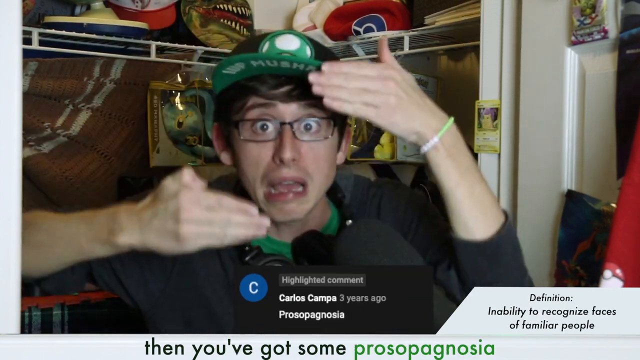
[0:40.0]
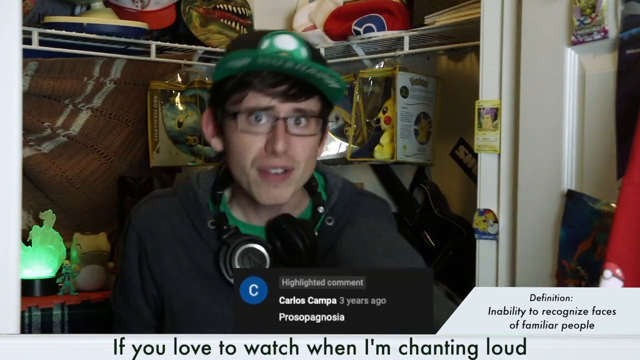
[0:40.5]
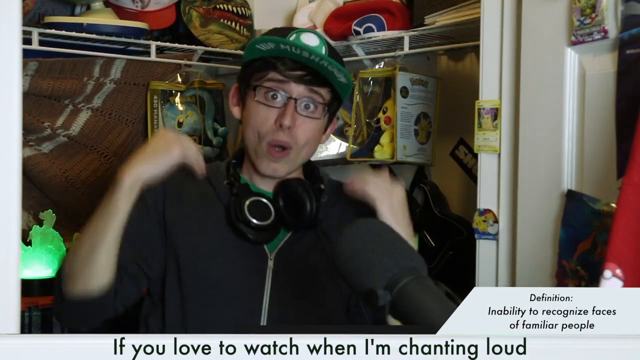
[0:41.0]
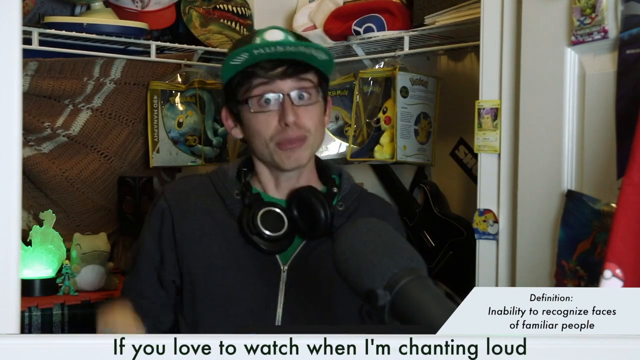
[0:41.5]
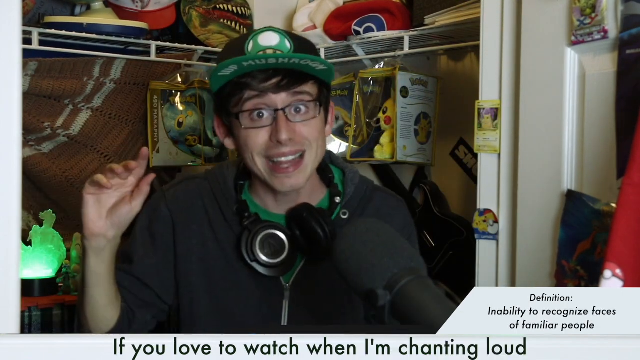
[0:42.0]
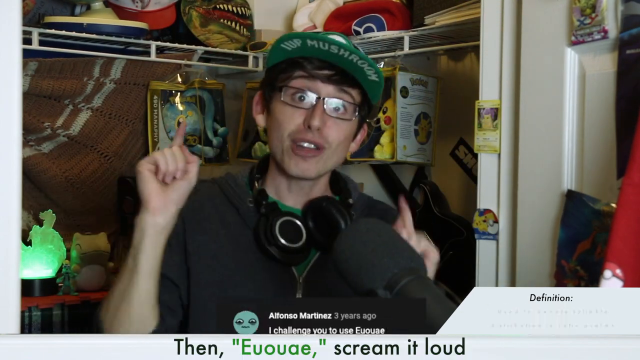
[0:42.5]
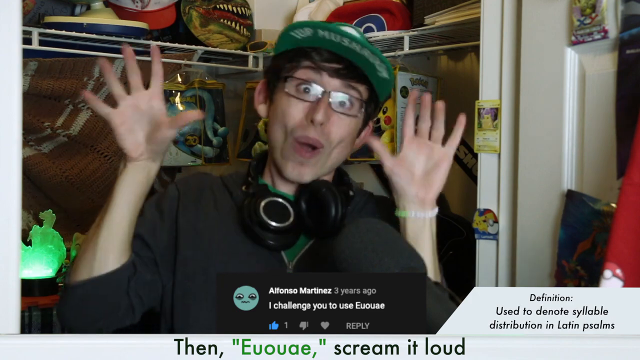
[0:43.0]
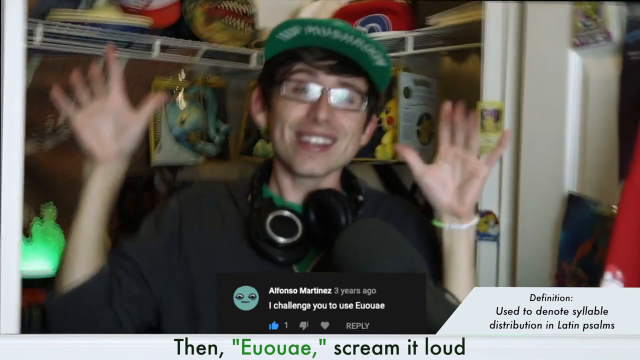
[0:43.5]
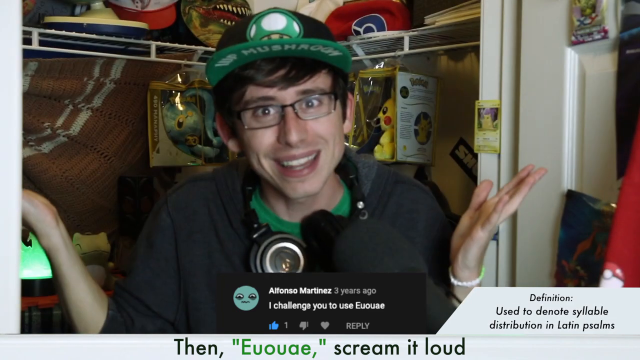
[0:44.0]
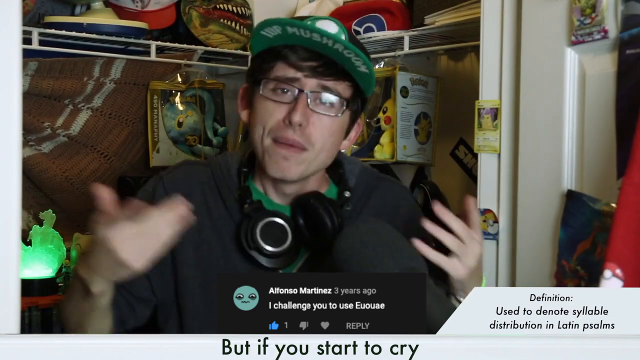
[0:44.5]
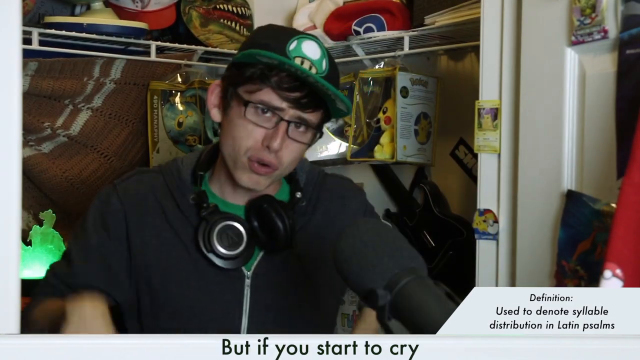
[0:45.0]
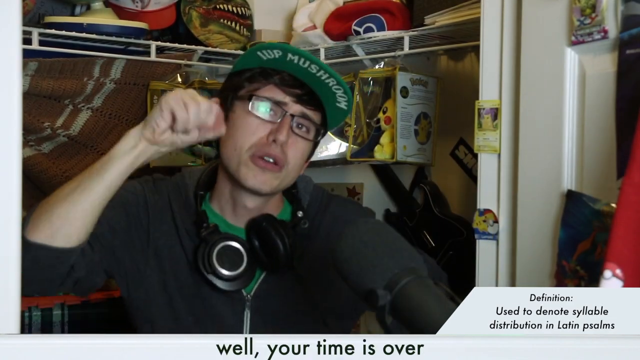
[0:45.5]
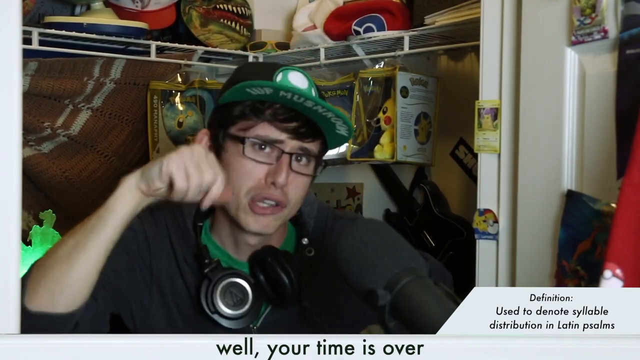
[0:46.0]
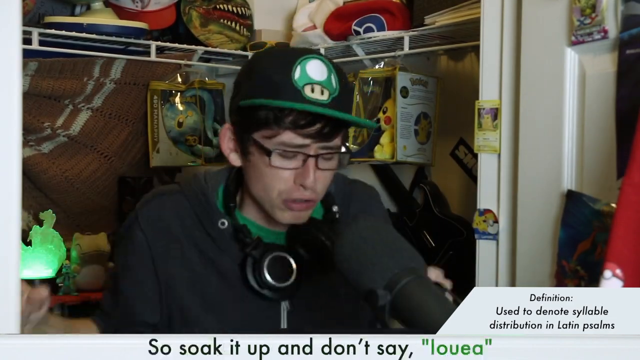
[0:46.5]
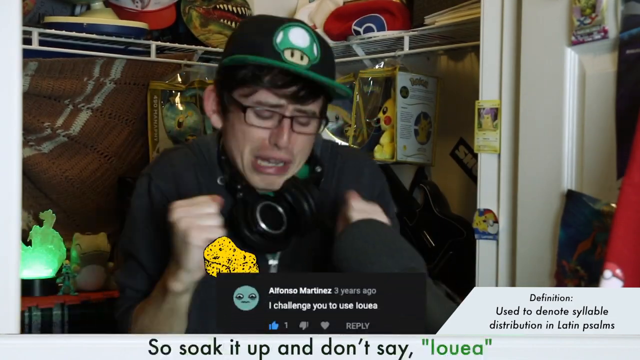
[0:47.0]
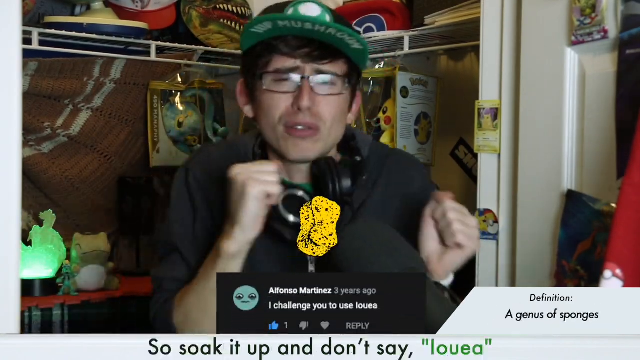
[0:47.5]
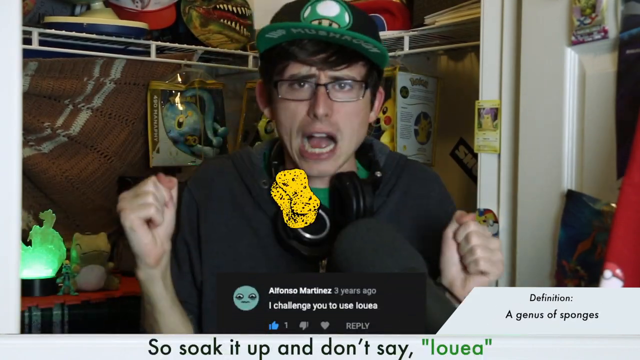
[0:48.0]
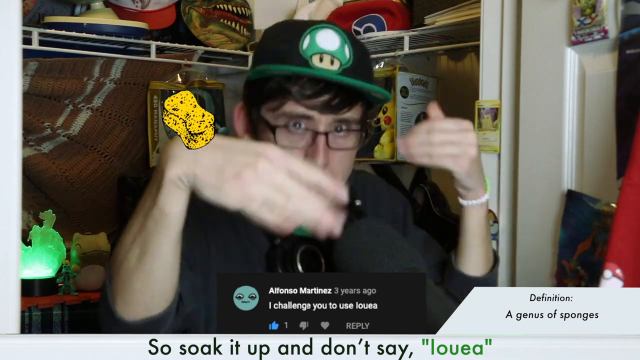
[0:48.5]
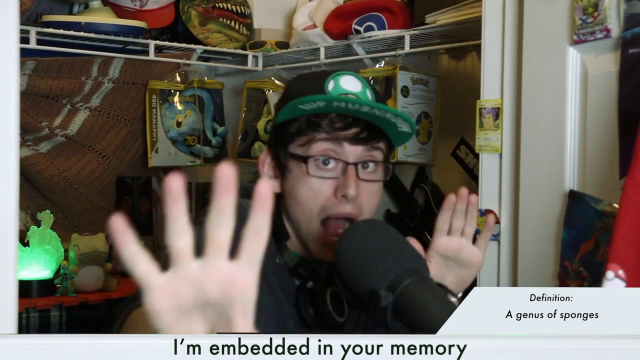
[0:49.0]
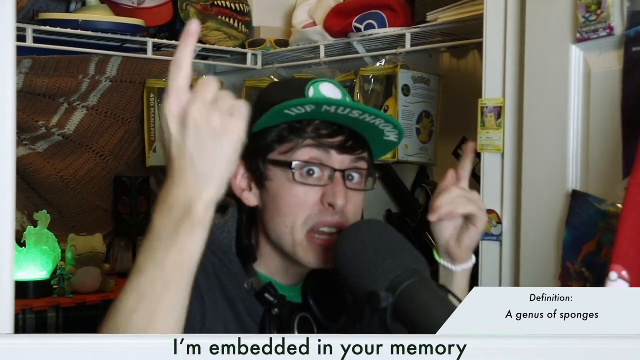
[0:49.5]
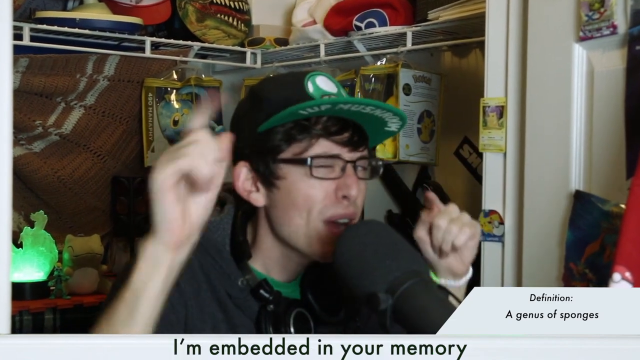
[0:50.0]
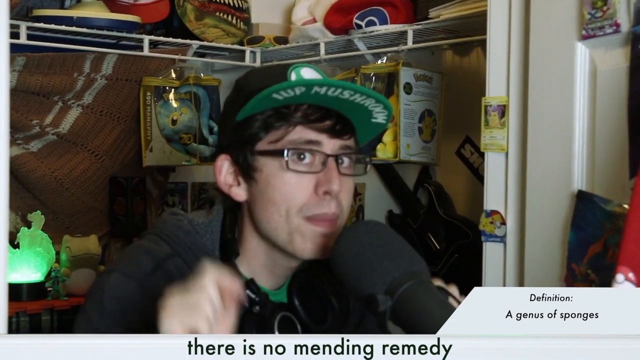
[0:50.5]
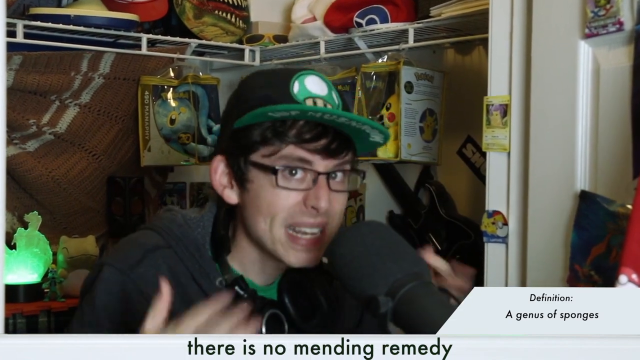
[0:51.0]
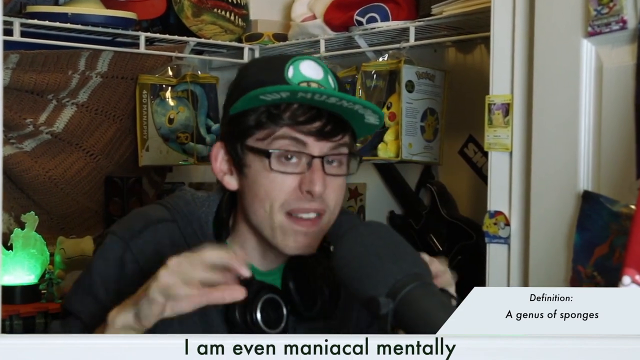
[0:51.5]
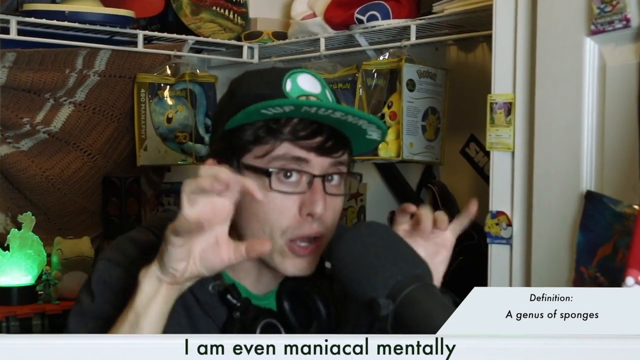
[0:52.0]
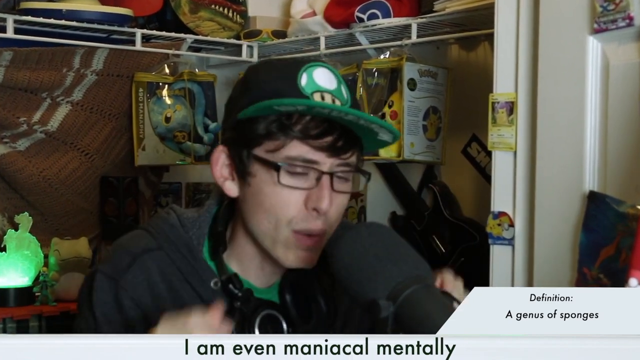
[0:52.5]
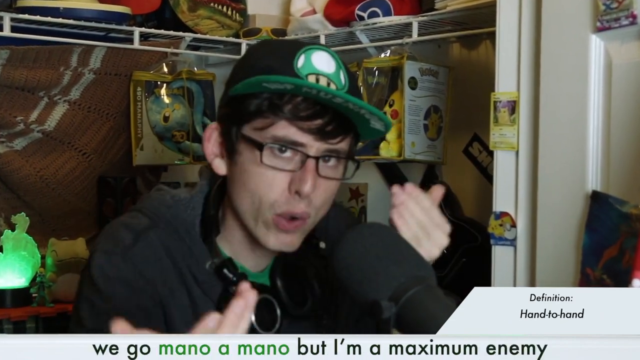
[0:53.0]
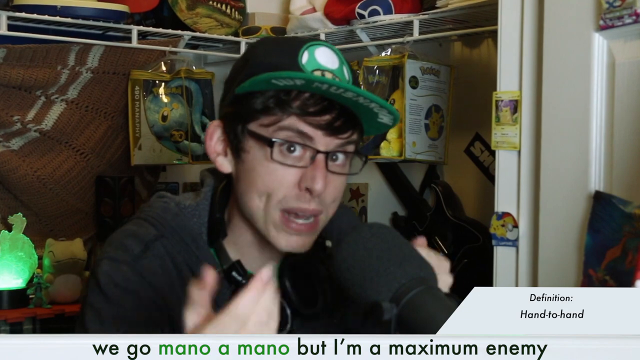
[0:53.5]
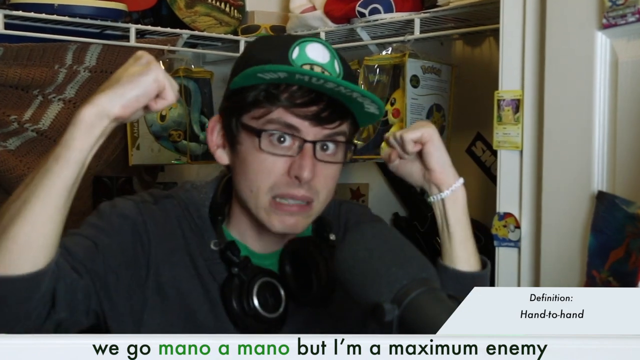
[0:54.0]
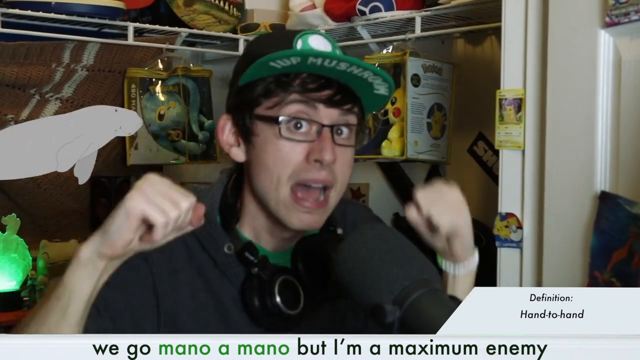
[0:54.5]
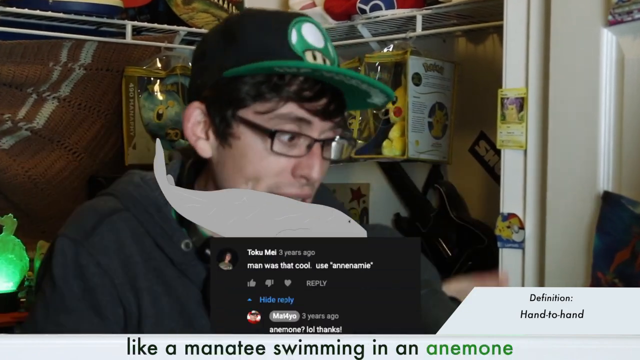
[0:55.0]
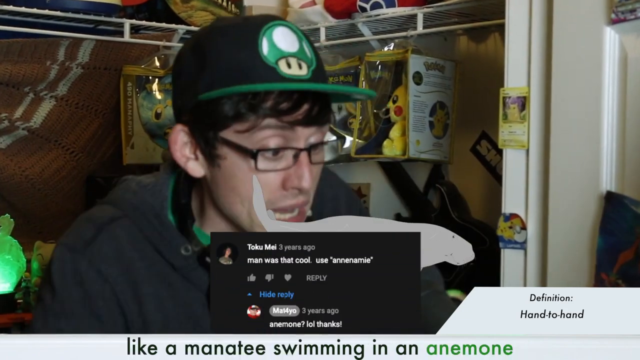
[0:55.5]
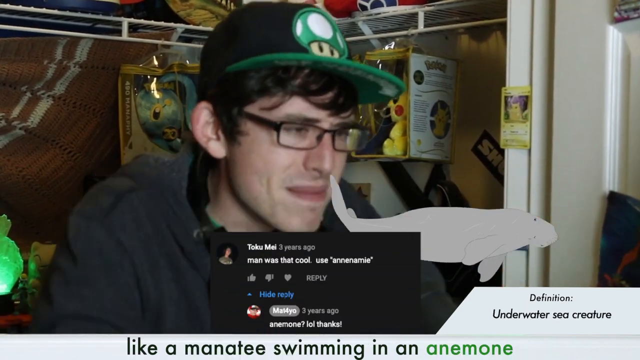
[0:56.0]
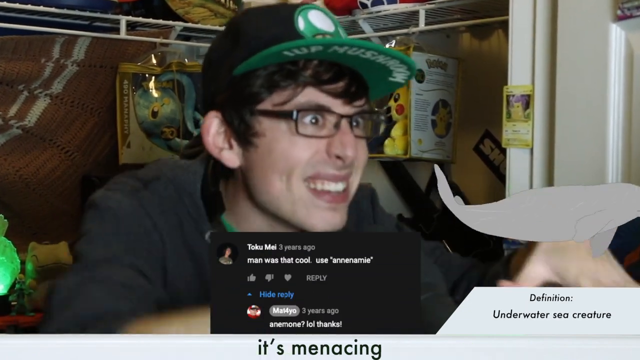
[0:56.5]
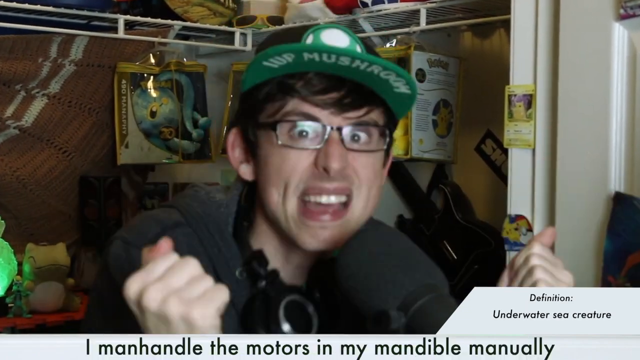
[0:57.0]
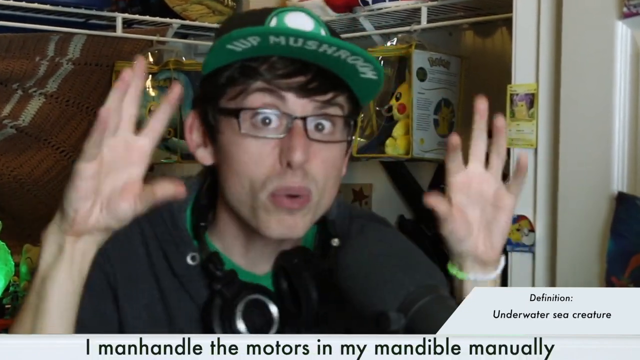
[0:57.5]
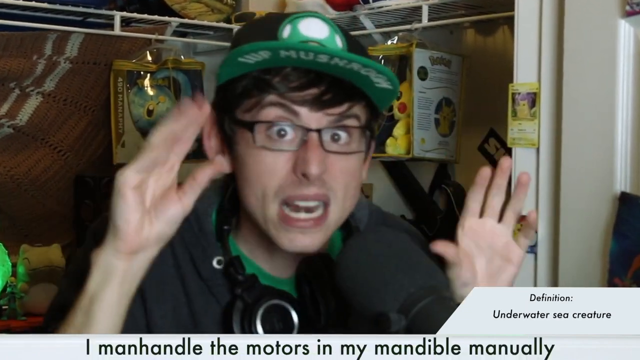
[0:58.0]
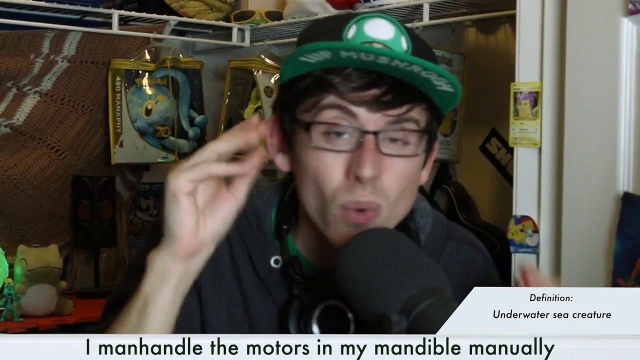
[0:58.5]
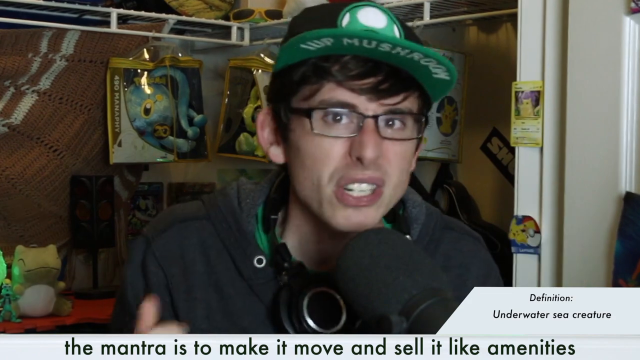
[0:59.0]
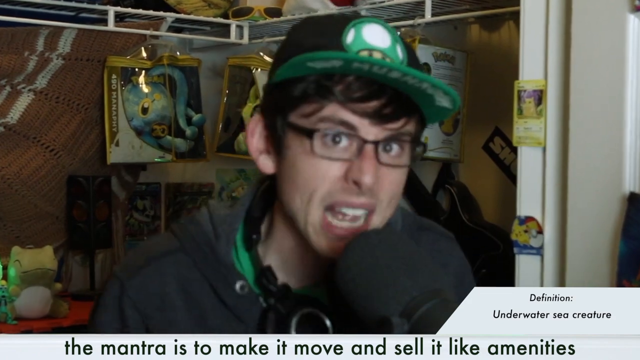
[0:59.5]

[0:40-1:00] The black comment box changes to say "I challenge you to use Euouae", a comment from Alfonso Martinez, and the definition changes to define Euouae. The screen shakes as the man keeps rapping with the words people have provided. He uses his hands to emphasize the words, such as pretending to cry with his right hand. As he shakes left and right, a small image of a yellow sponge pops up from the bottom on top of the comment "I challenge you to use louea", whose definition reads "a fear of sponges". As he continues rapping, a gray manatee image moves from the left of the screen to the right while the comment "man was that cool use 'annenamie'" pops up from the bottom, and the definition changes to match.